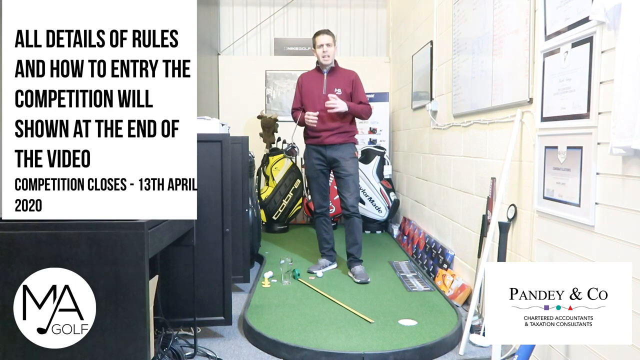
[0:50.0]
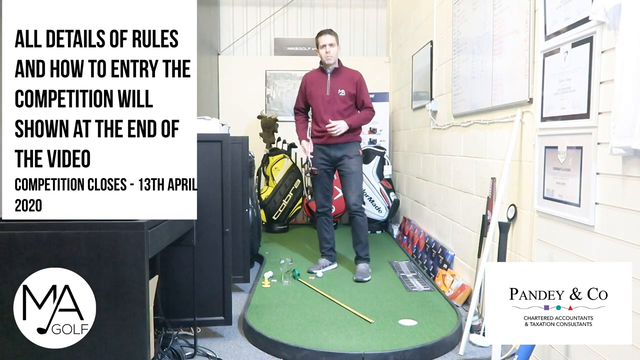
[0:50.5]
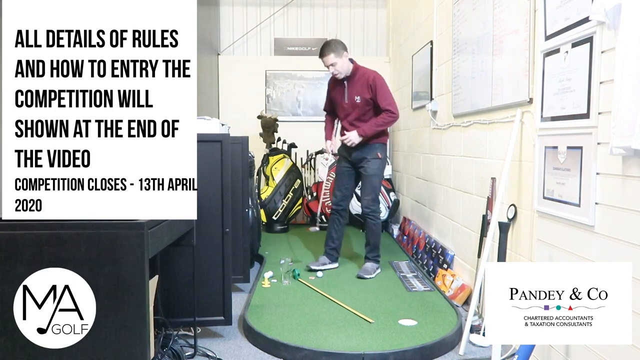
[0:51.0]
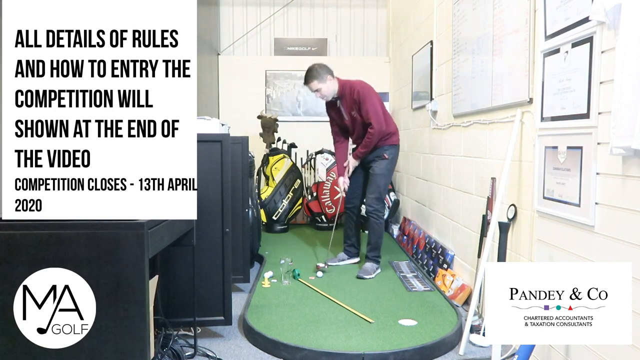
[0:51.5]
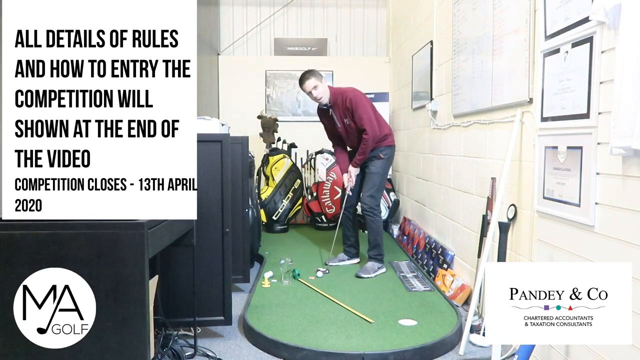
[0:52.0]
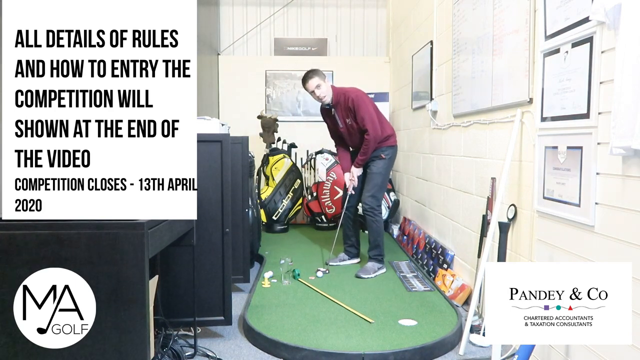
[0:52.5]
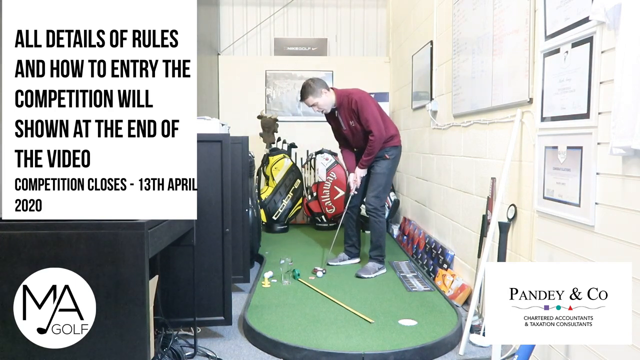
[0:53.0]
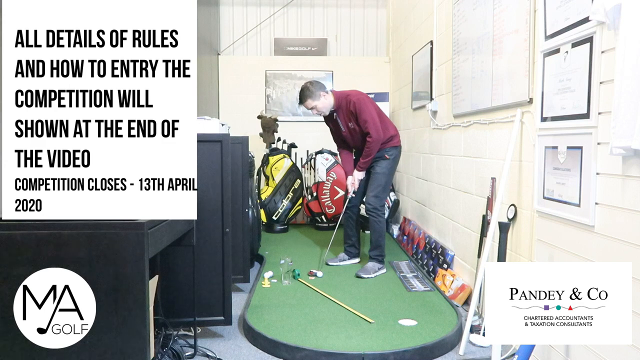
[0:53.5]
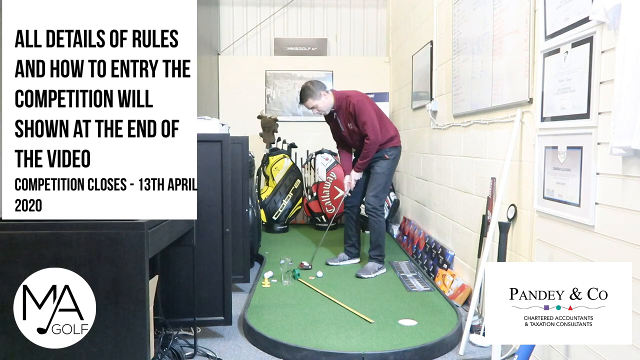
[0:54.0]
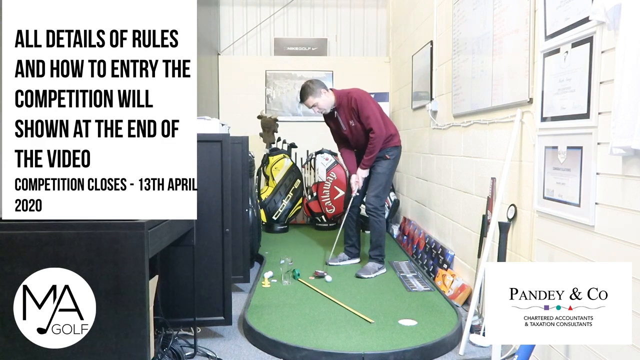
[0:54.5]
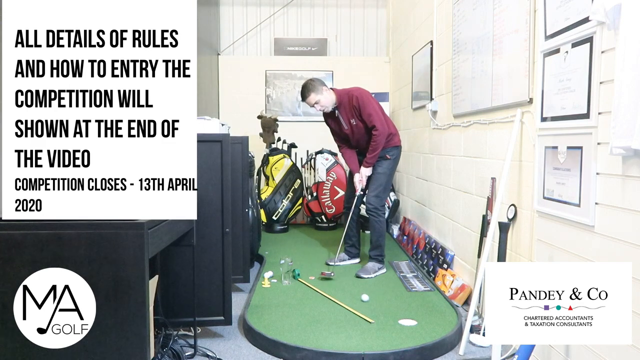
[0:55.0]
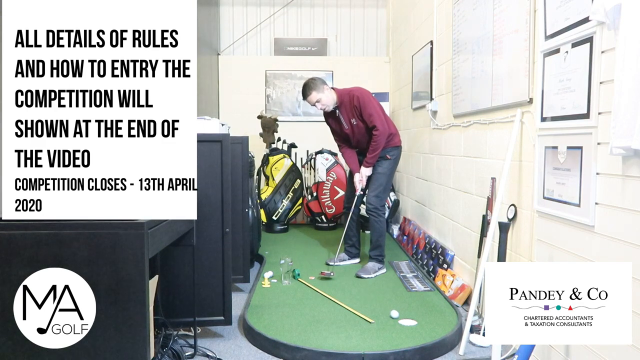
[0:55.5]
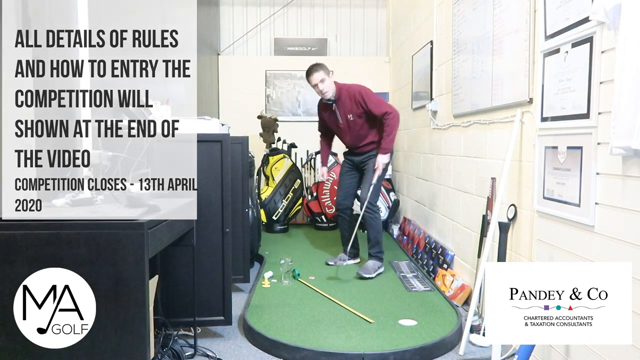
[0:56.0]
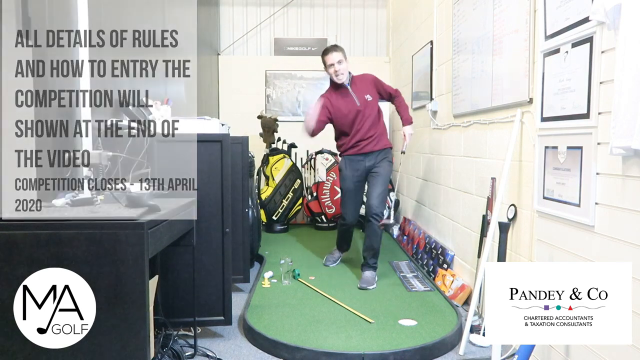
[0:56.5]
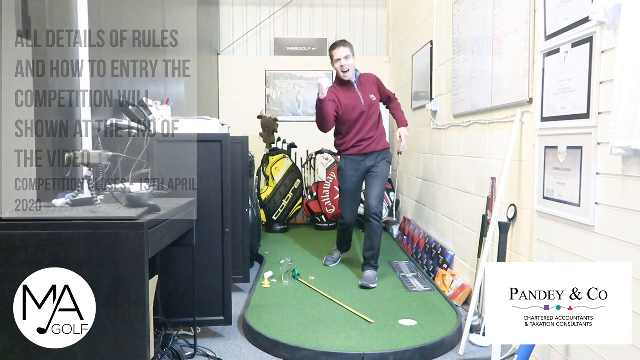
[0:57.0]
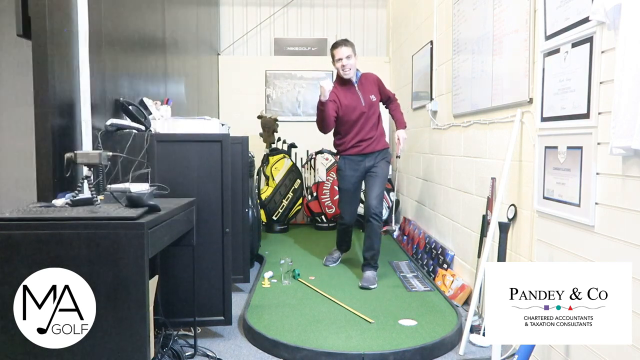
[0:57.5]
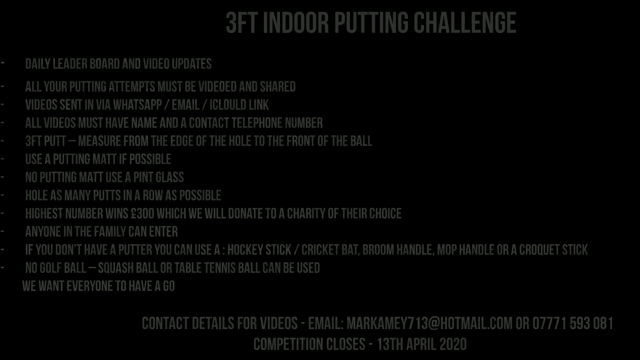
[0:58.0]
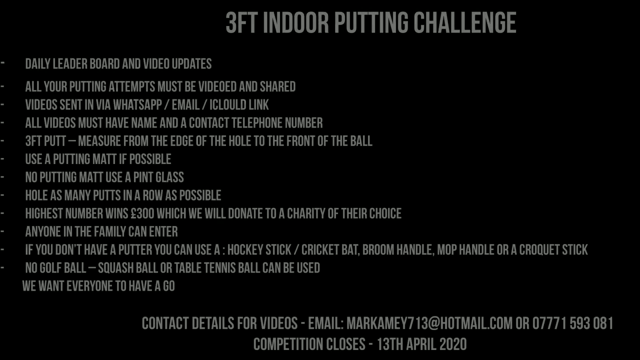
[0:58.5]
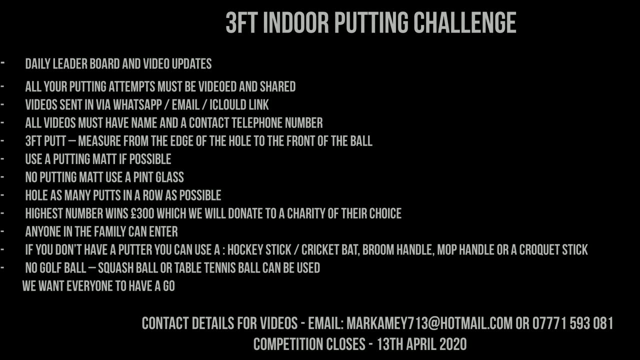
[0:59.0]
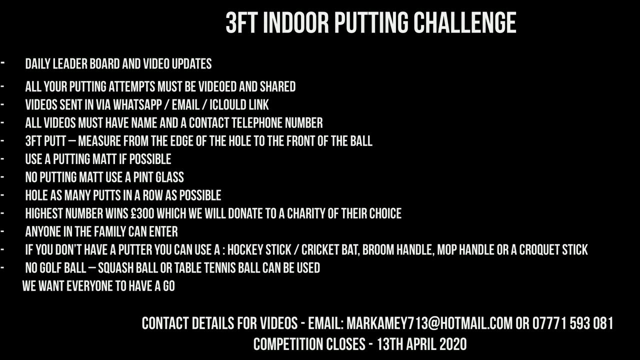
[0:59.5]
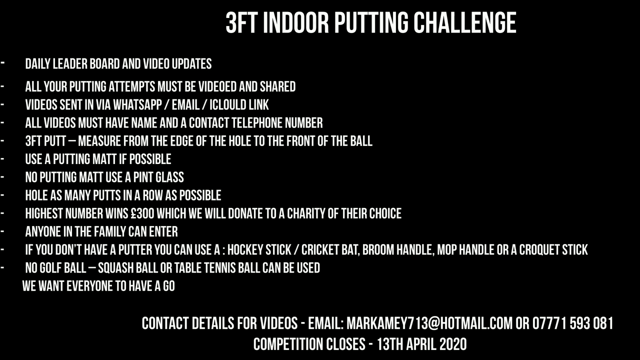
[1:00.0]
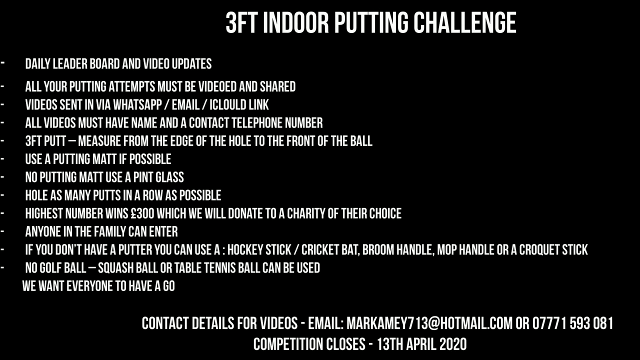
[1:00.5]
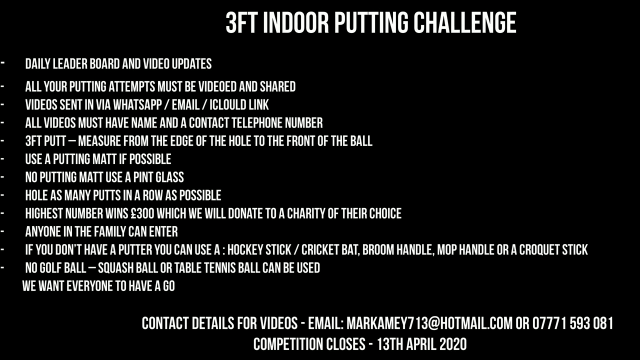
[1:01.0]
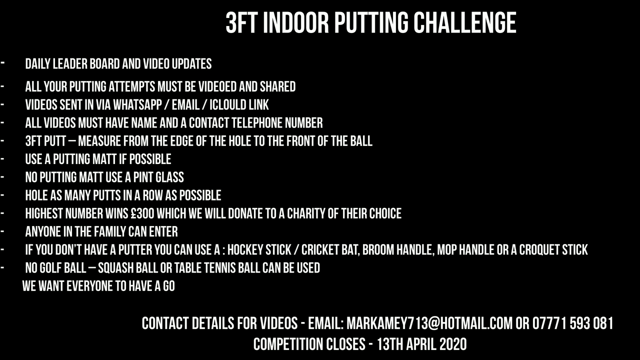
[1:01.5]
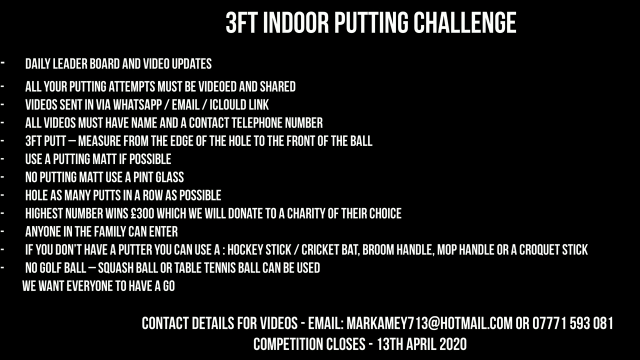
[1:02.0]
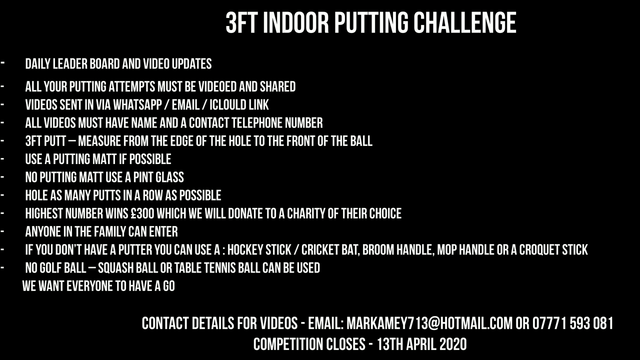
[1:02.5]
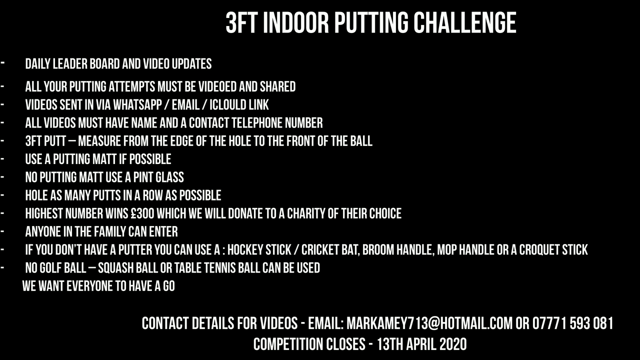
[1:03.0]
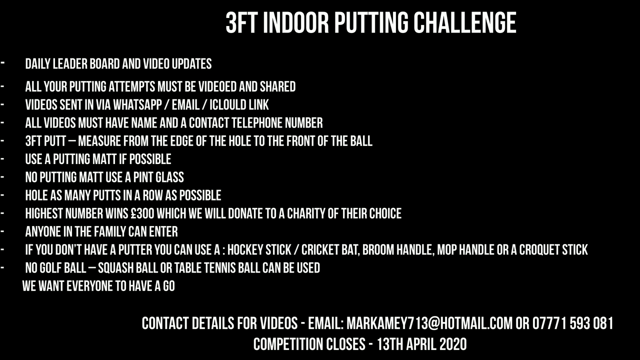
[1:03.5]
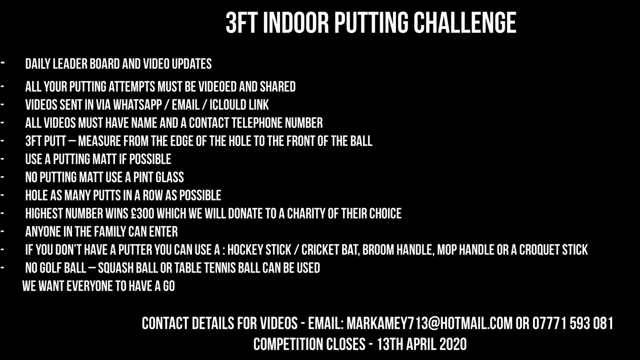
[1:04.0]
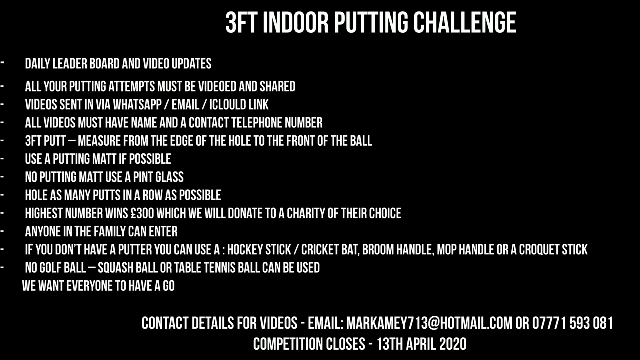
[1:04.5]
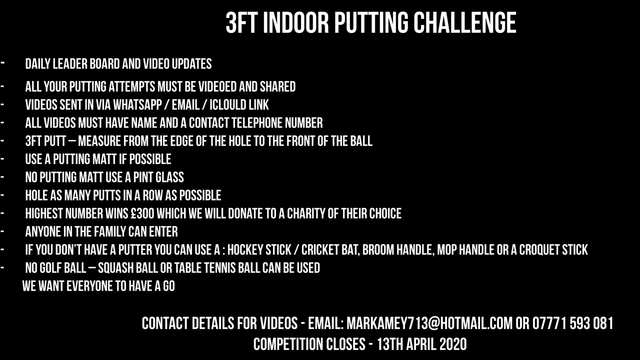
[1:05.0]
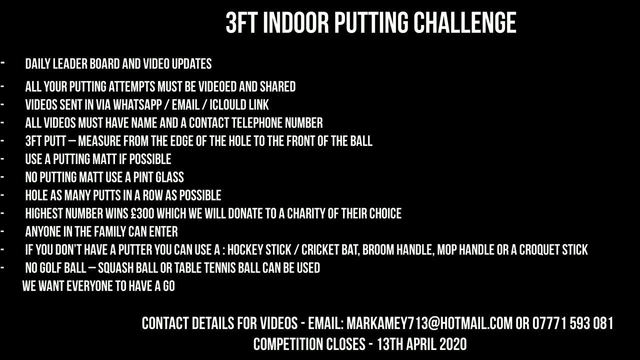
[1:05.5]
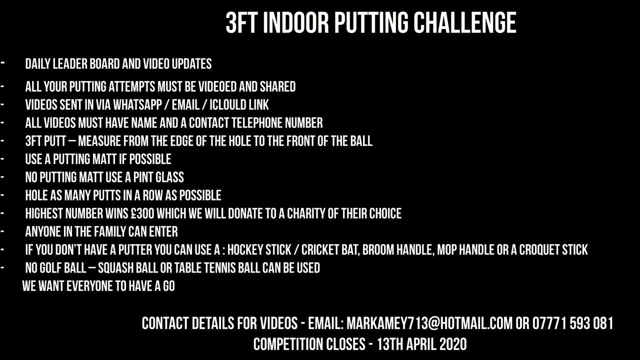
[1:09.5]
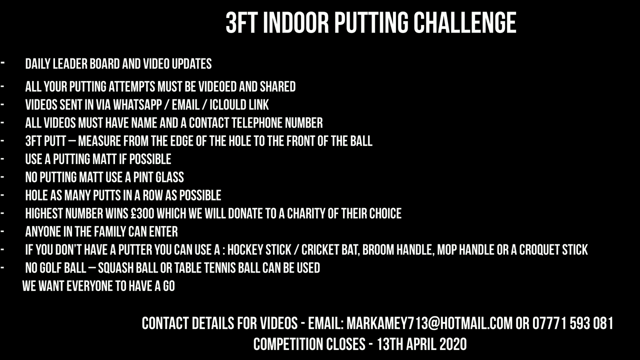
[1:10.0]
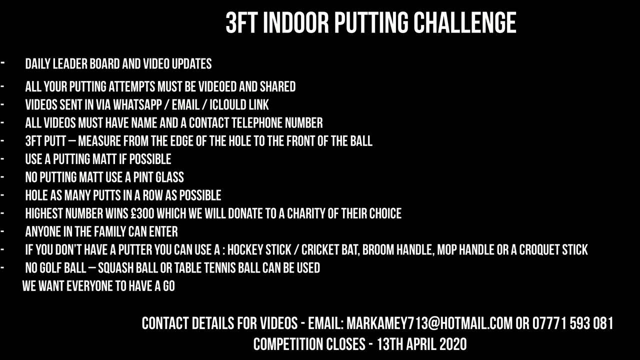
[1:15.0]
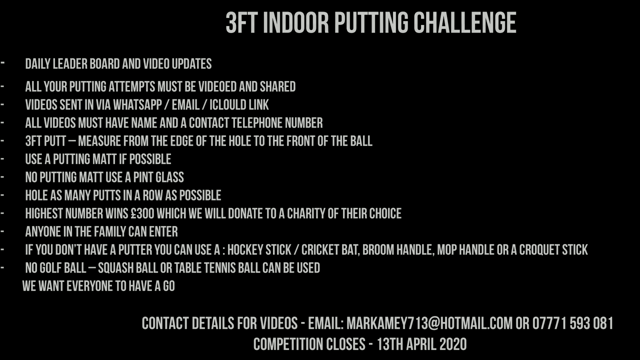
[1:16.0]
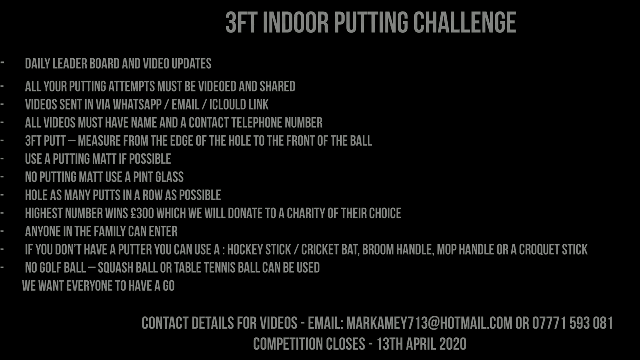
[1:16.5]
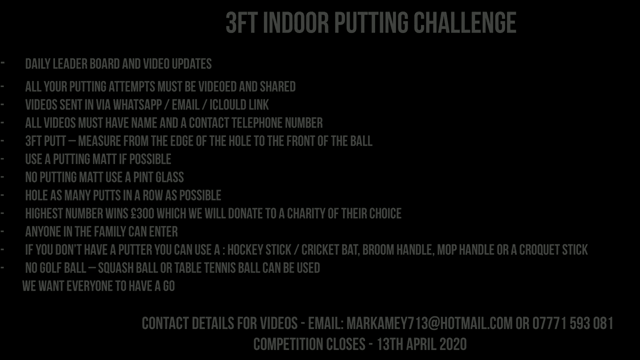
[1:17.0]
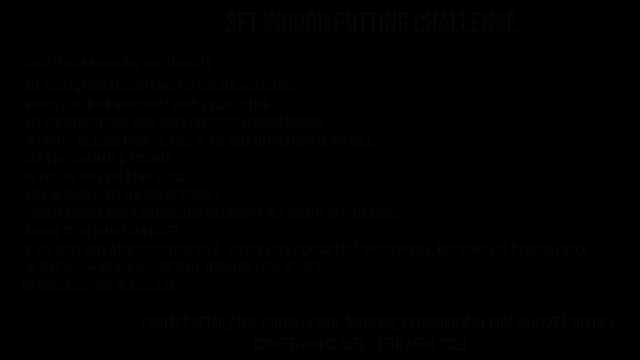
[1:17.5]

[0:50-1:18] The man crouches down into a golf pose with his knees slightly bent, his back straight but crouched over, and both hands on the golf club, his right hand lower down and his left hand above it. Still looking at the camera, he moves his feet a little, then swings very gently to the right before hitting the ball, which goes directly into the hole. He celebrates by straightening his left leg, slightly bending his right knee, shifting his hips to the left, raising his right hand in the air in a fist and shouting in celebration. The screen then goes black, and at the top white text reads "three foot indoor putting challenge", with multiple bullet points of instructions below it.